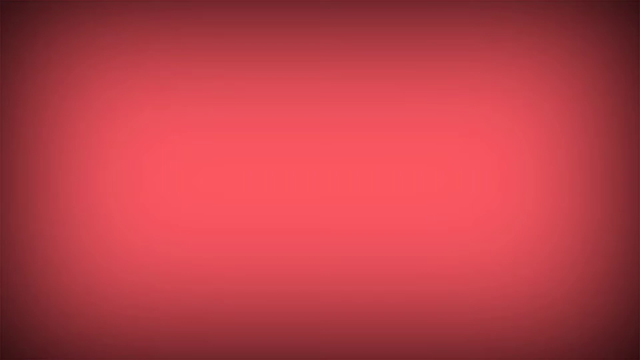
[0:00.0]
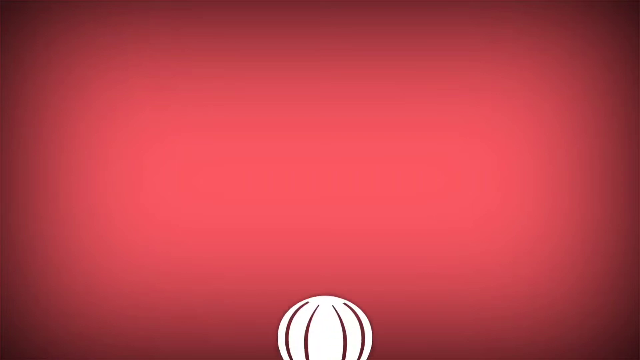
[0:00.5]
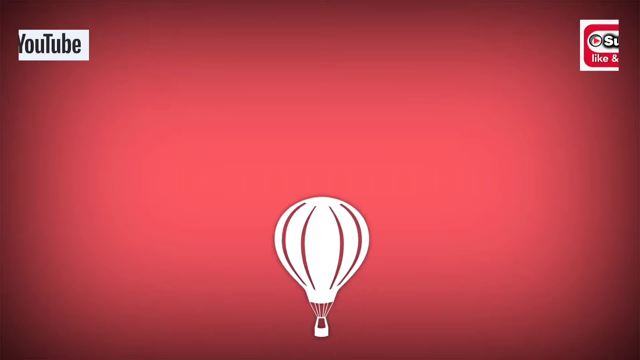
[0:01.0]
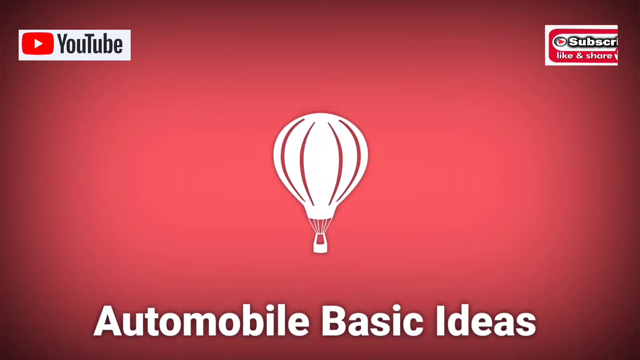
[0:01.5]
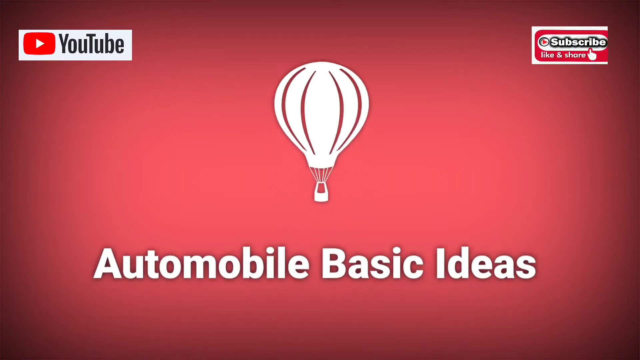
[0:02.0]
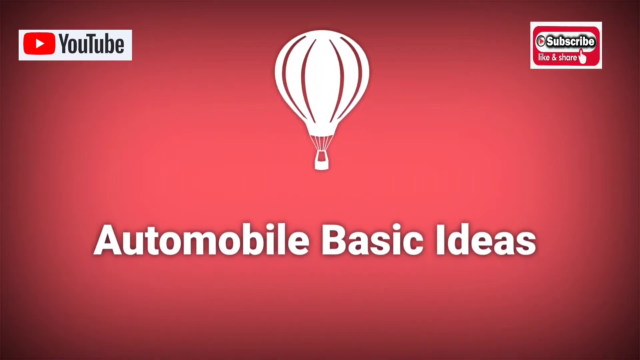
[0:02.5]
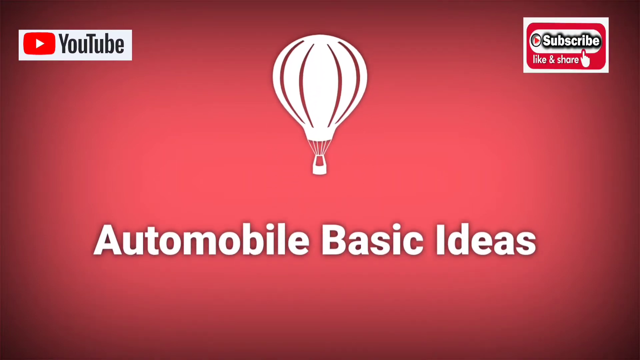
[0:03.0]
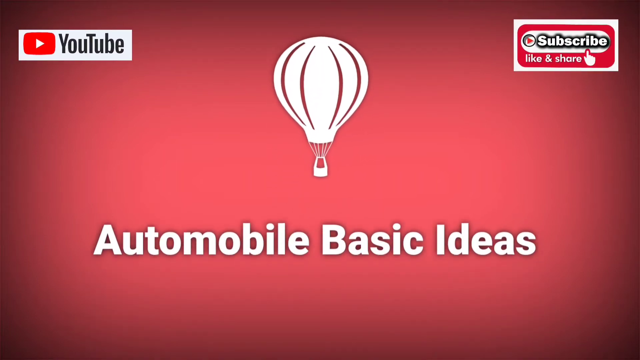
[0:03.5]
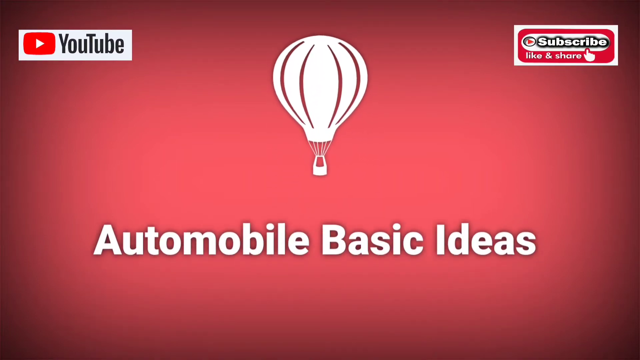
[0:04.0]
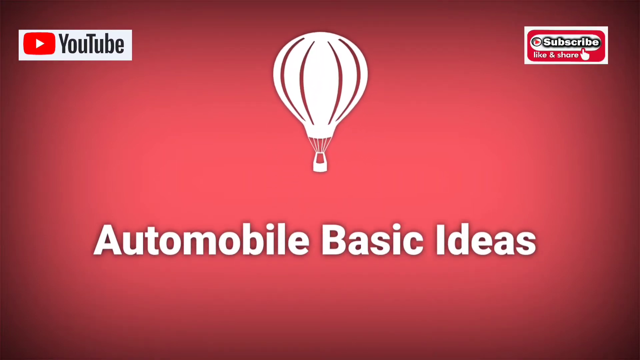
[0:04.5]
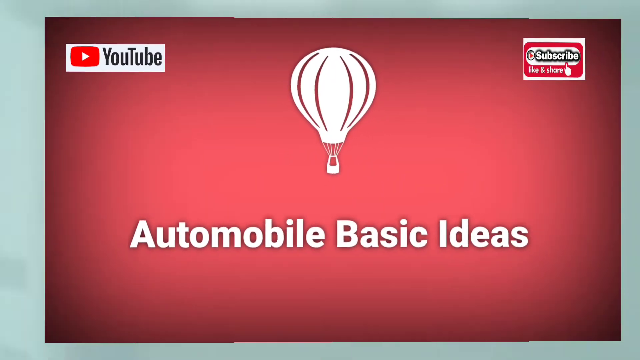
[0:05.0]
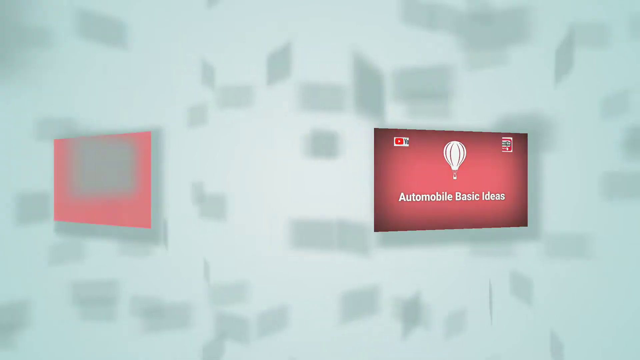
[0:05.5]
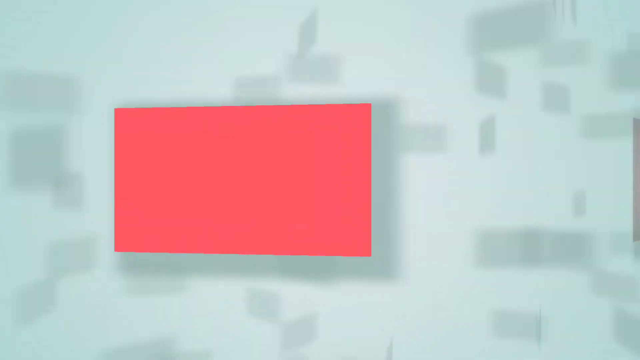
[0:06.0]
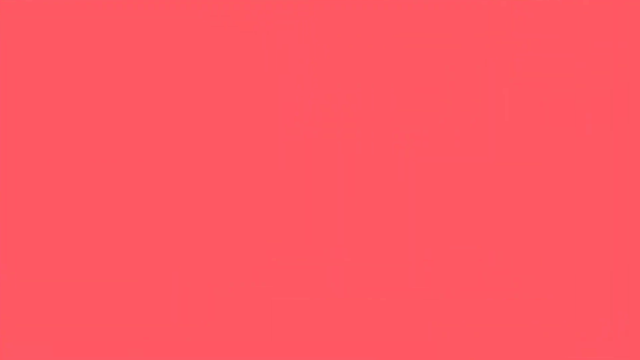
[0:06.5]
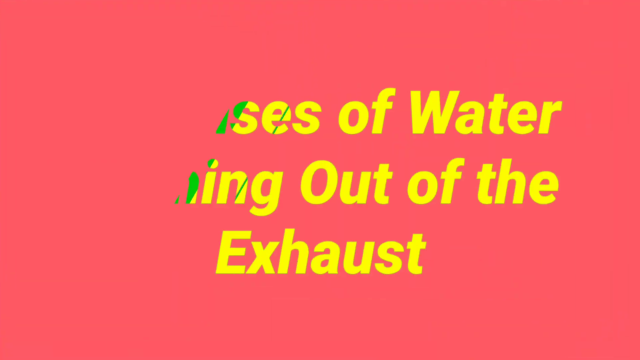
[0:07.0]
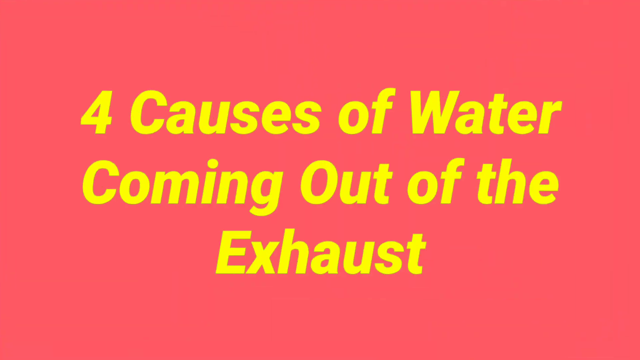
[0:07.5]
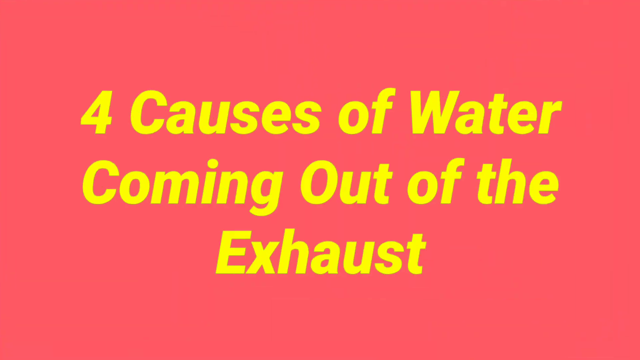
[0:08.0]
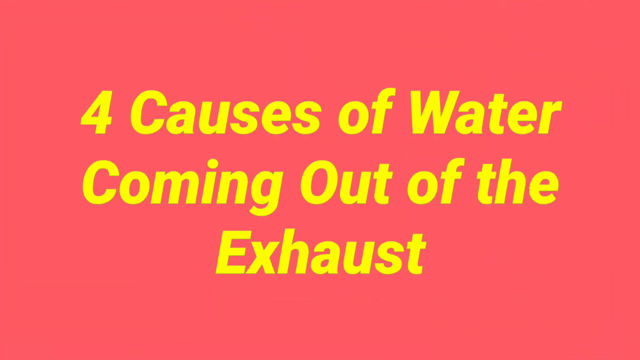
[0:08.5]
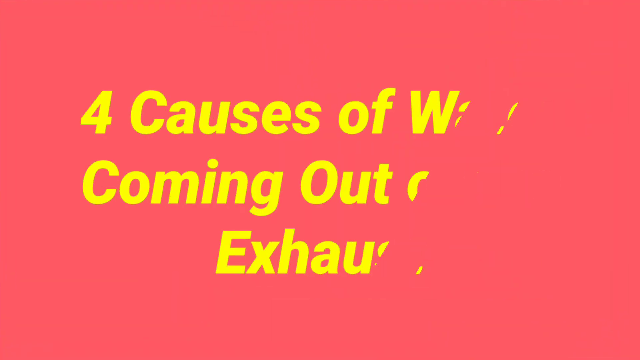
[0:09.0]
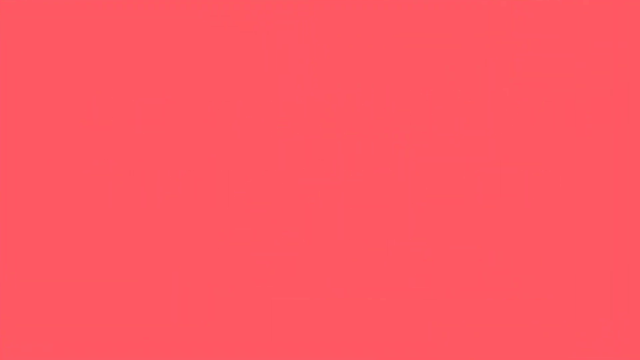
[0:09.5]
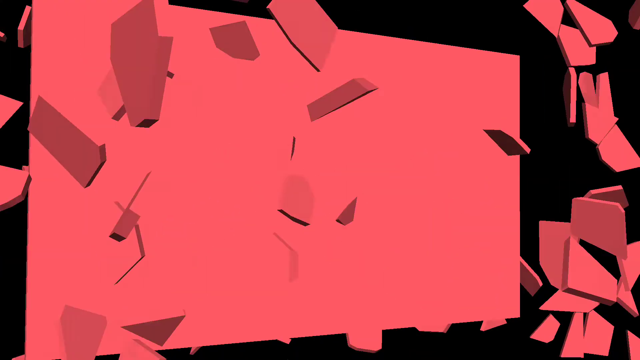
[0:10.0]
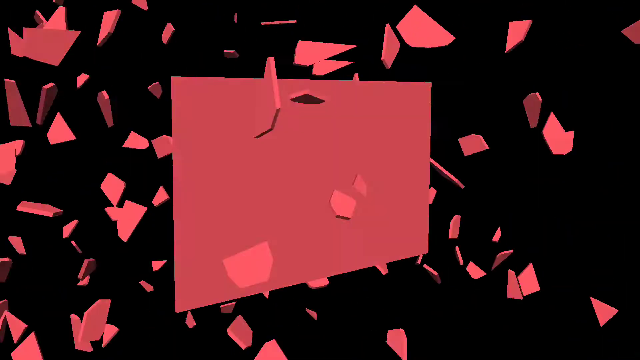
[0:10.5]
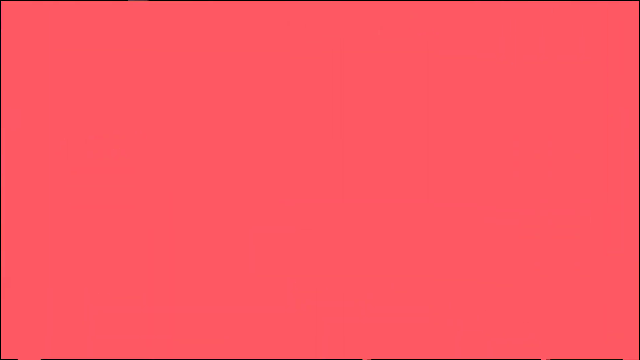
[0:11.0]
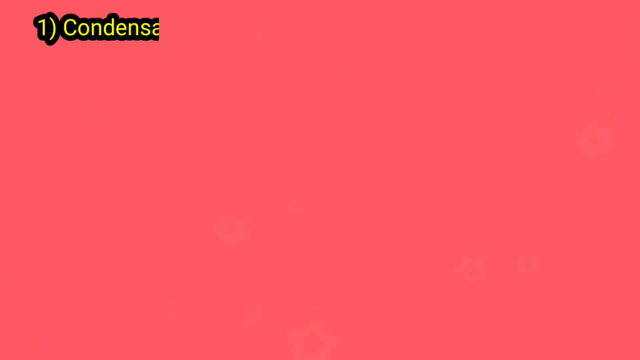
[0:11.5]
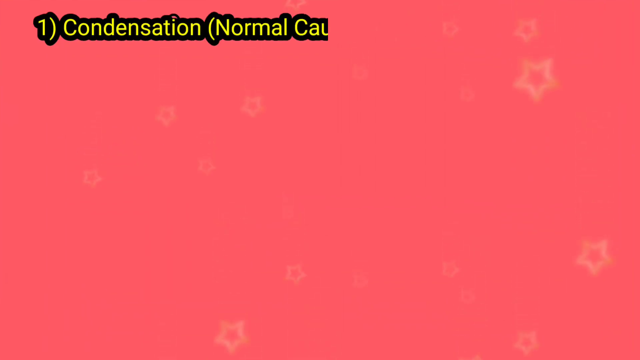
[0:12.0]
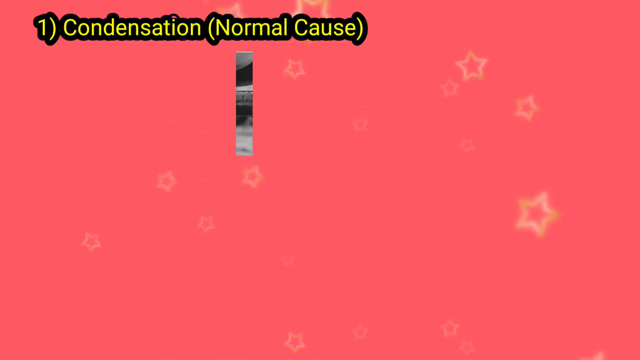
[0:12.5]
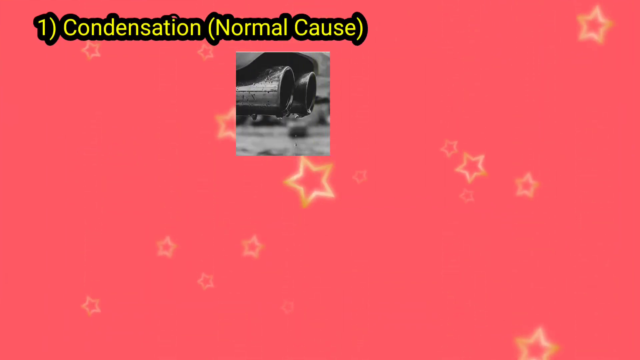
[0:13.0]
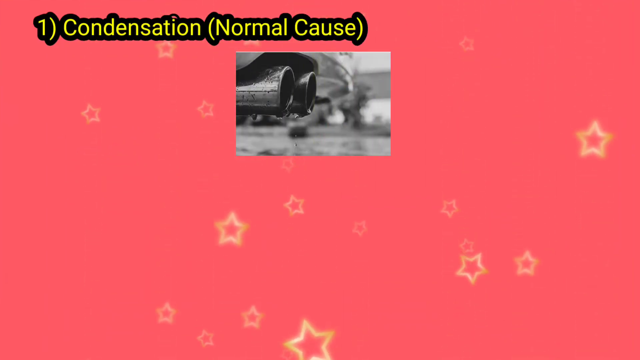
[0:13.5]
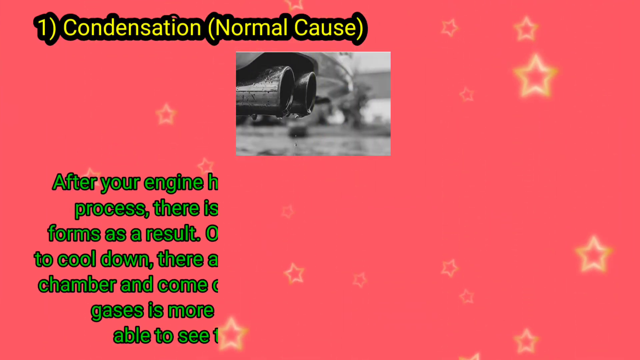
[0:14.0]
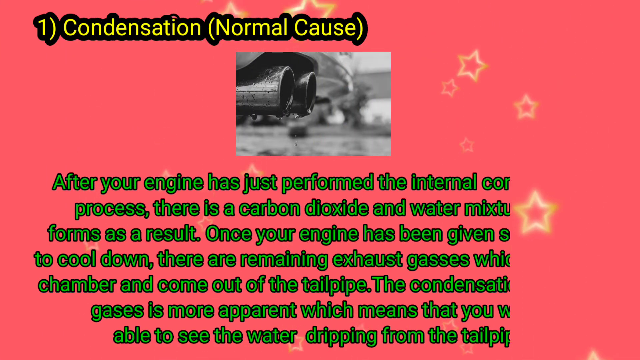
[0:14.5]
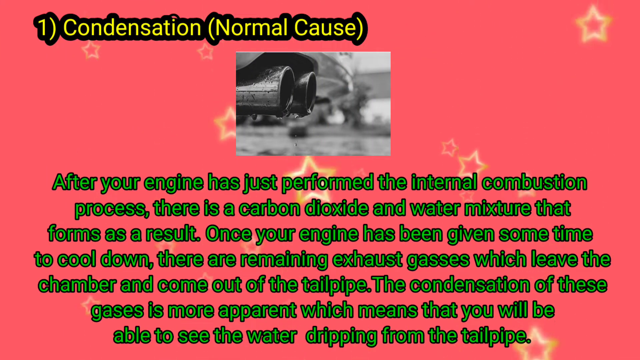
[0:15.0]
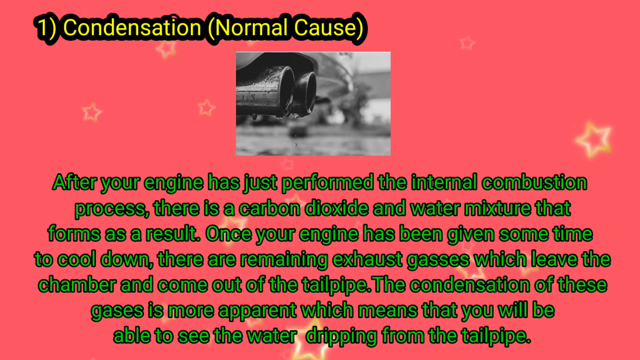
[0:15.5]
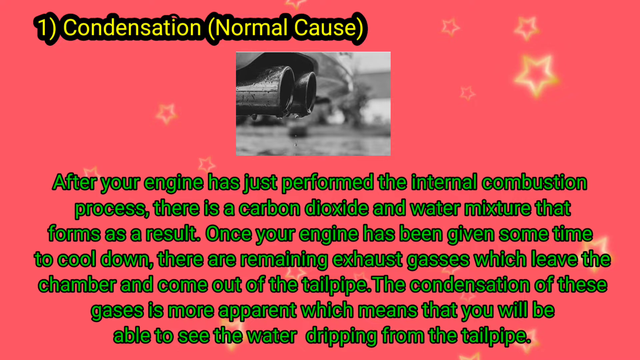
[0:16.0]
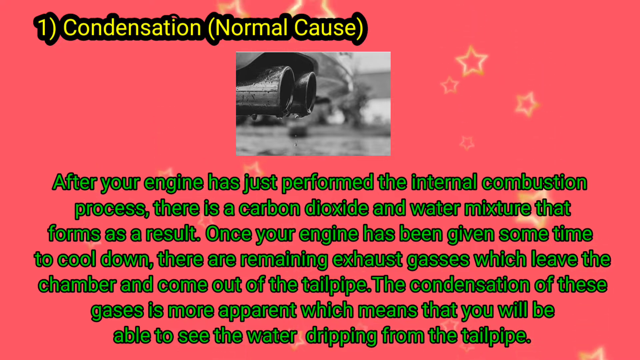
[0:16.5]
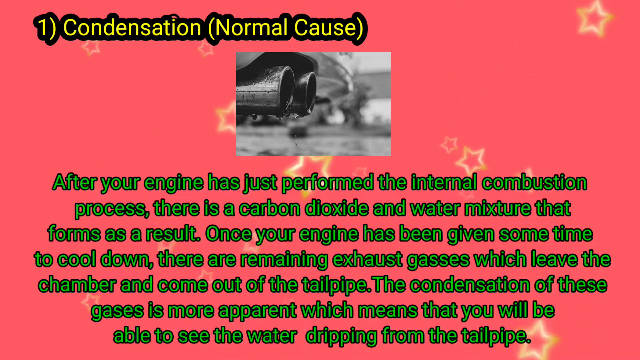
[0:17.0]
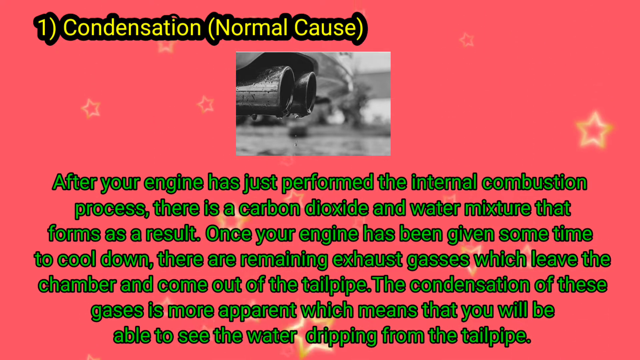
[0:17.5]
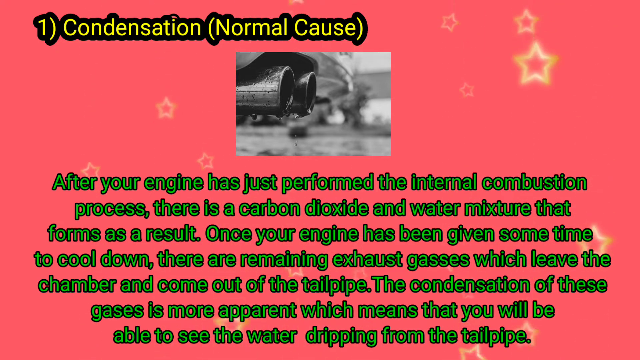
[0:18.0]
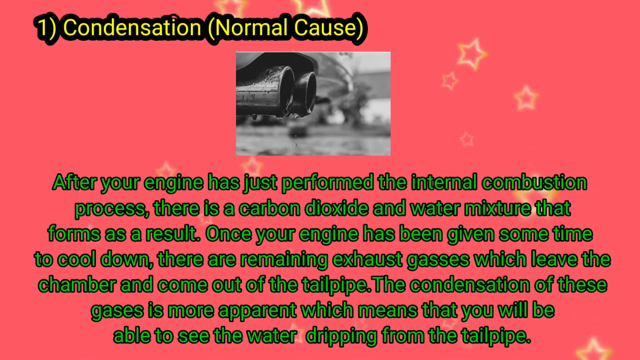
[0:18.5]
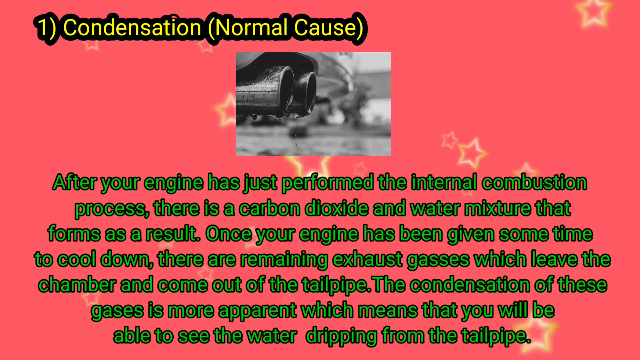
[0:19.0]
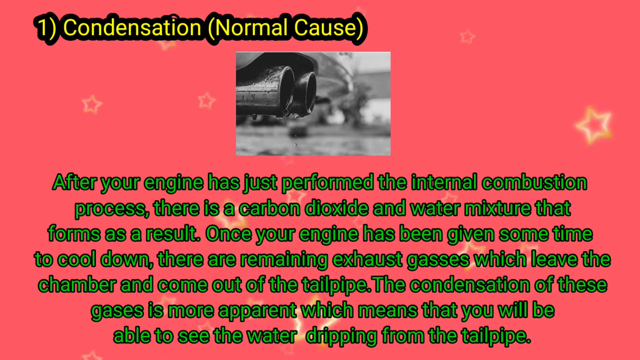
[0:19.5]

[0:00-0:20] A pinkish-reddish background fills the screen. In the center is a white balloon attached to a white bucket underneath. On the left side is a white and red box with a white triangle in its center, and black lettering on the side reads "YouTube". On the right side is a white box with a red liner on the inside, with white lettering in the center reading "subscribe". Below that, white lettering reads "like and share", and there is a white finger on the right. White lettering at the bottom reads "Automobile Basic Ideas". The screen changes to the pinkish background, with yellow lettering in the center reading "four causes of water coming out of the exhaust". The text breaks off into pieces, leaving the pink background with yellow stars falling down. Text then reads "1) Condensation(Normal Cause)", followed by "After the engine has just performed the internal combustion process. there is a carbon dioxide and water mixture that forms as a result."